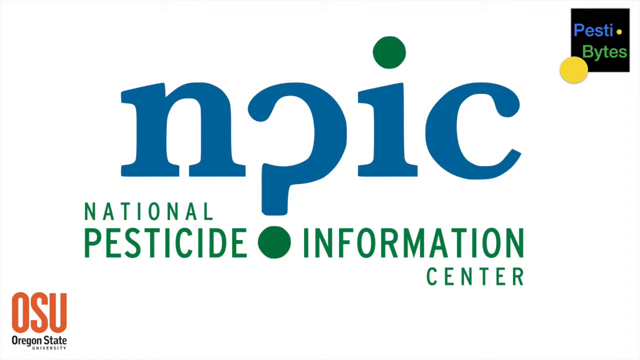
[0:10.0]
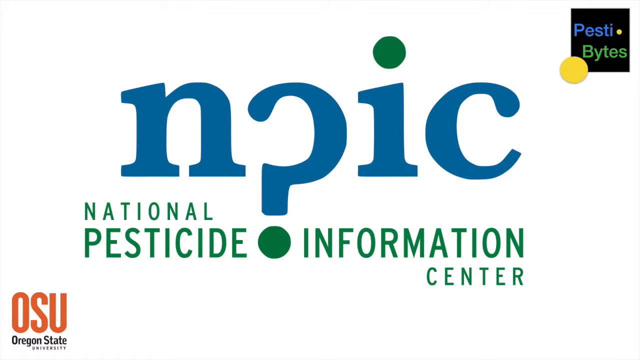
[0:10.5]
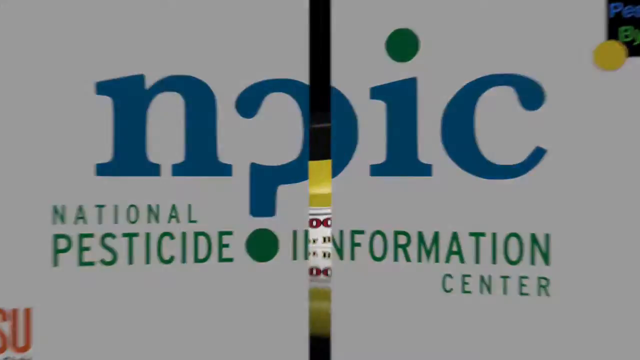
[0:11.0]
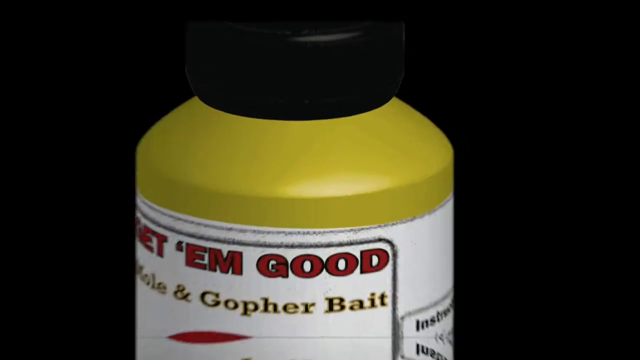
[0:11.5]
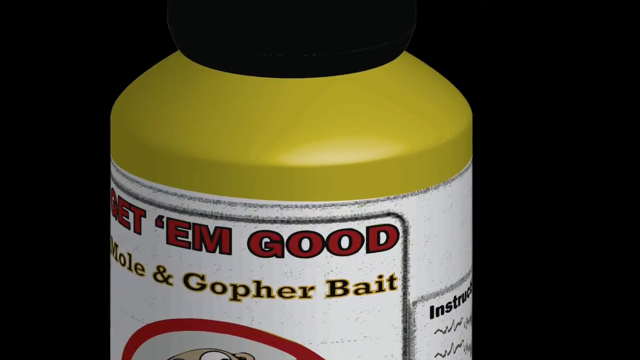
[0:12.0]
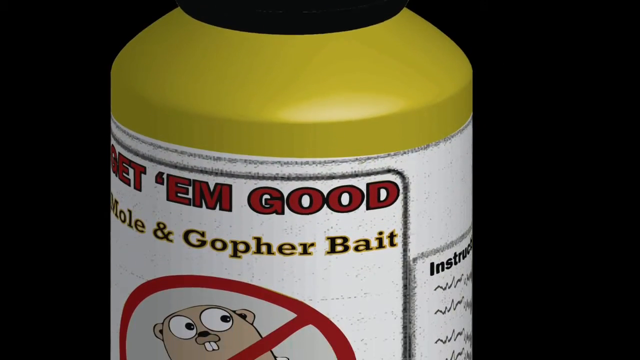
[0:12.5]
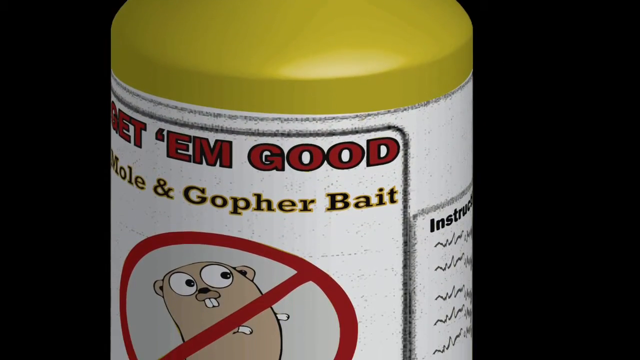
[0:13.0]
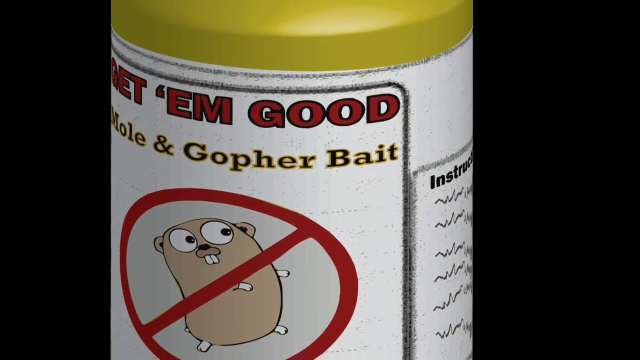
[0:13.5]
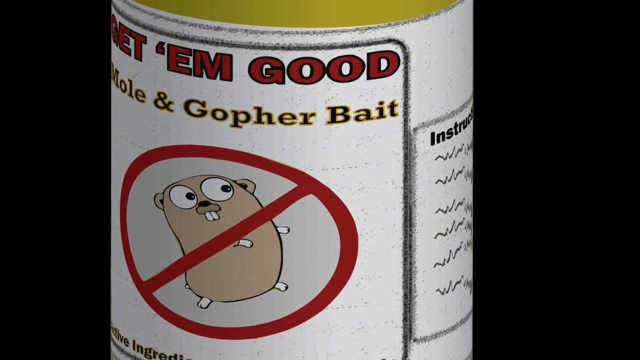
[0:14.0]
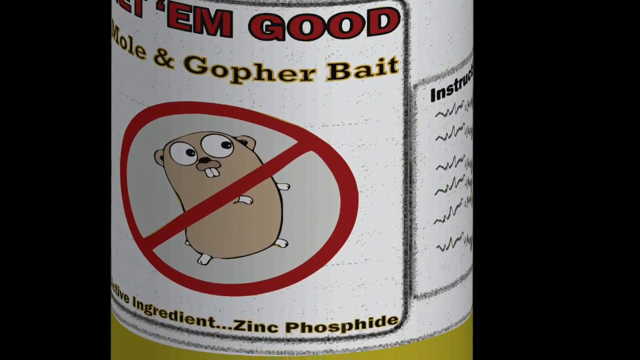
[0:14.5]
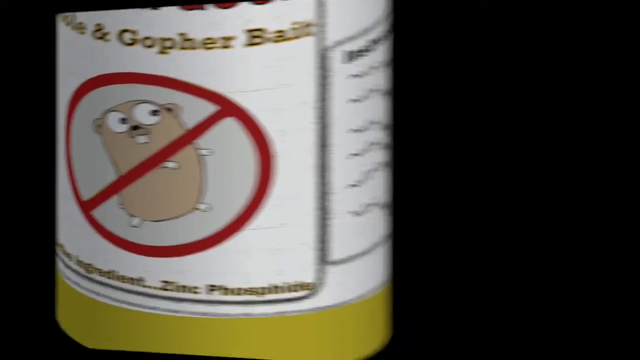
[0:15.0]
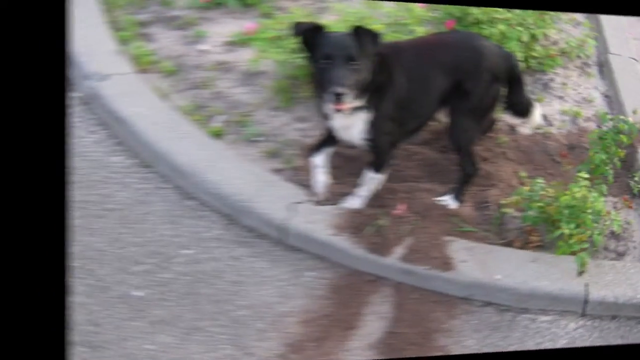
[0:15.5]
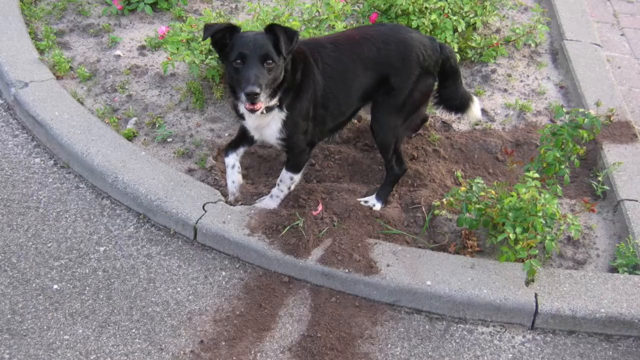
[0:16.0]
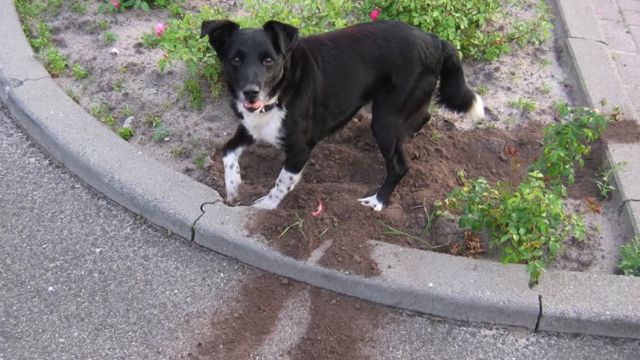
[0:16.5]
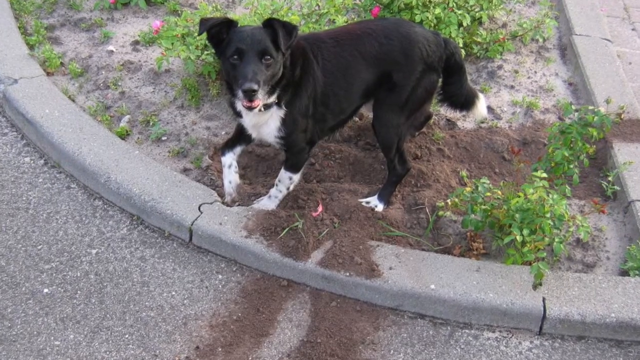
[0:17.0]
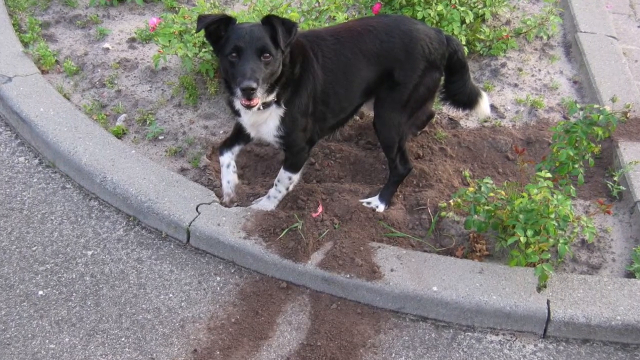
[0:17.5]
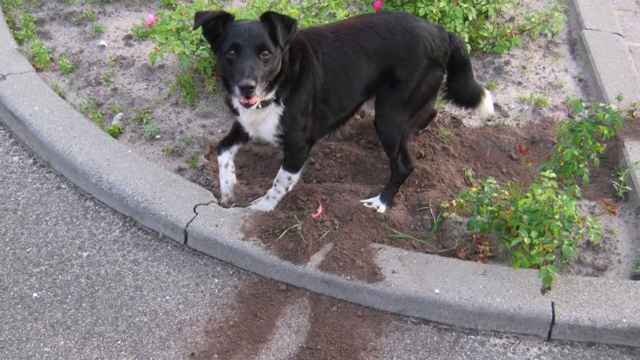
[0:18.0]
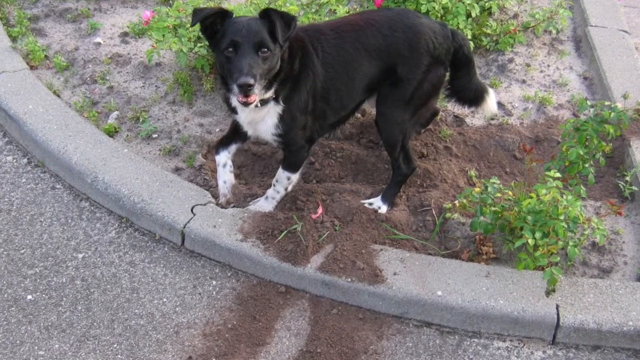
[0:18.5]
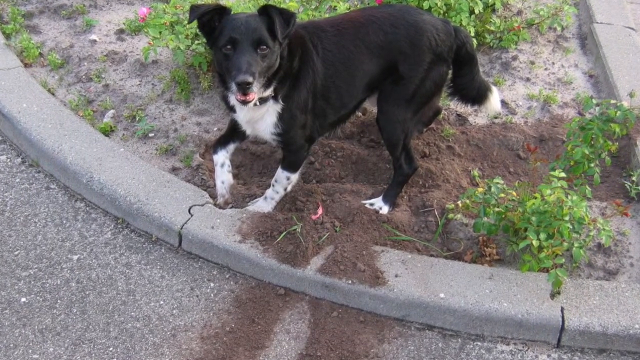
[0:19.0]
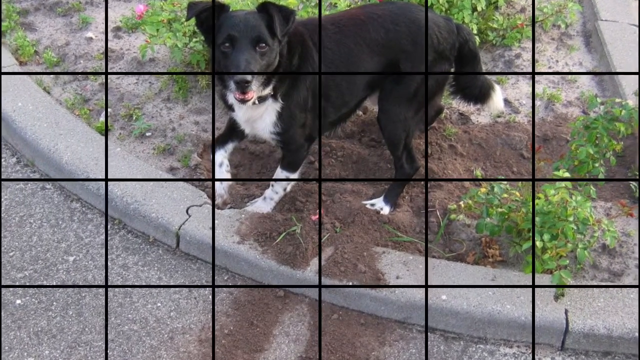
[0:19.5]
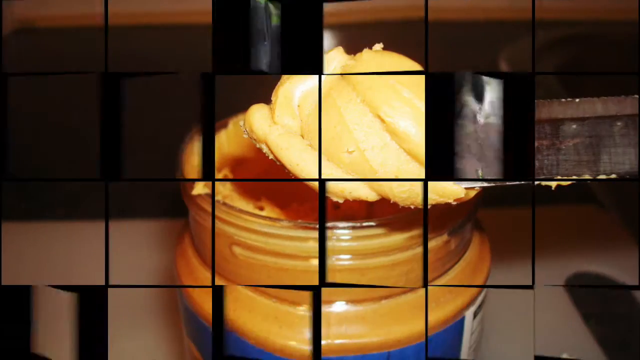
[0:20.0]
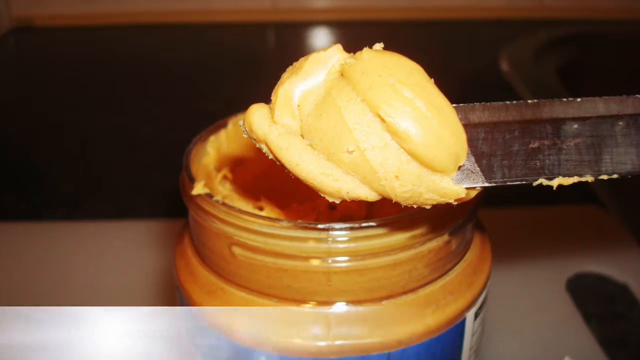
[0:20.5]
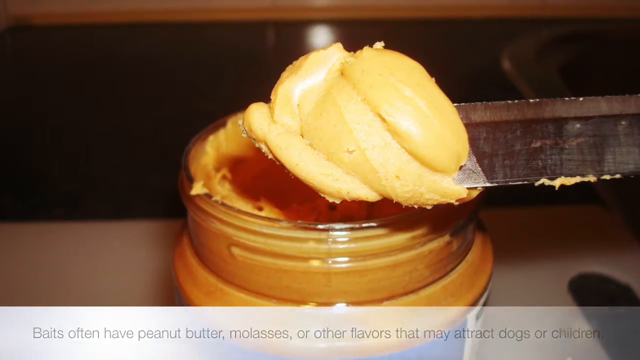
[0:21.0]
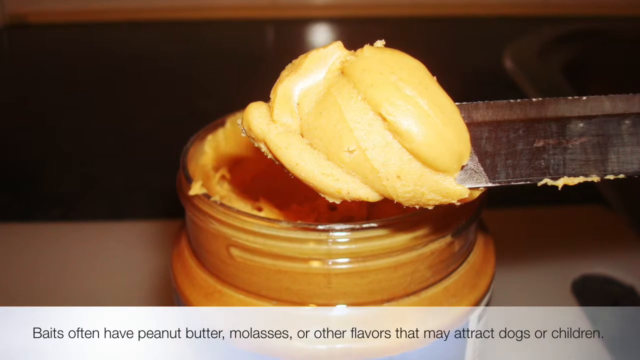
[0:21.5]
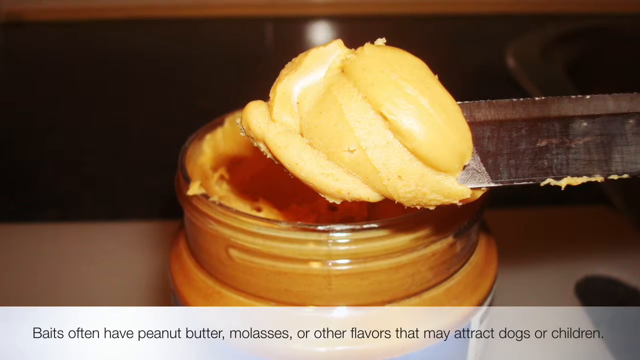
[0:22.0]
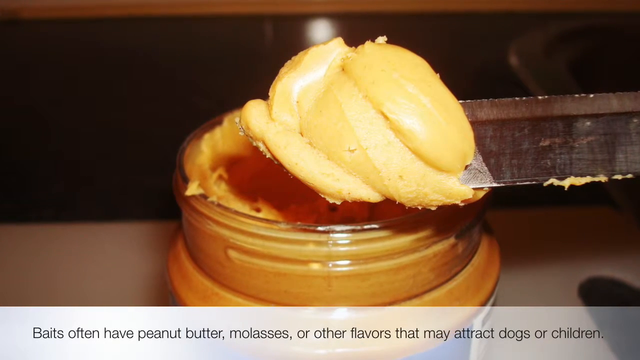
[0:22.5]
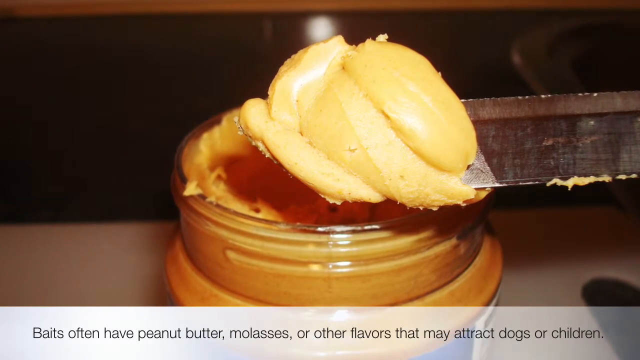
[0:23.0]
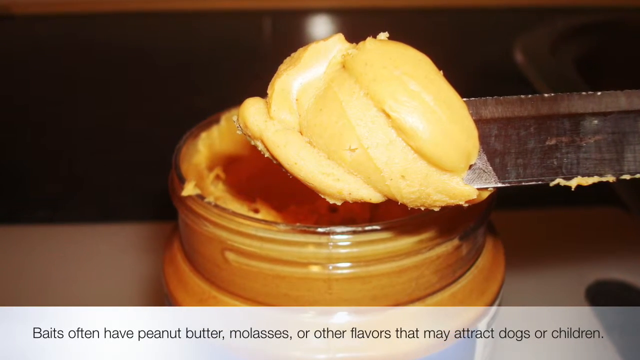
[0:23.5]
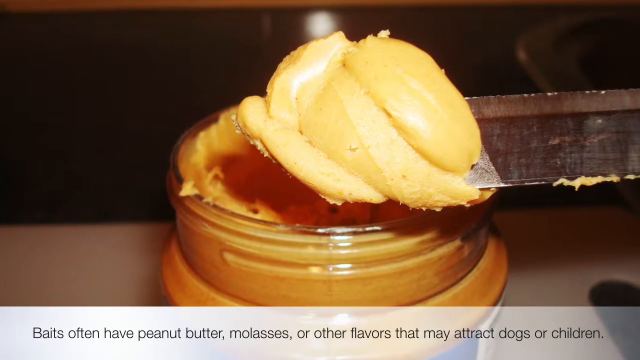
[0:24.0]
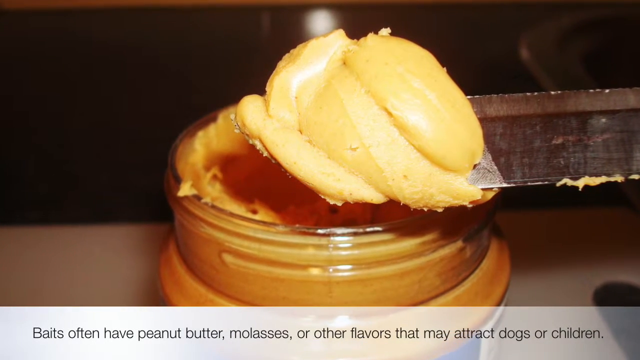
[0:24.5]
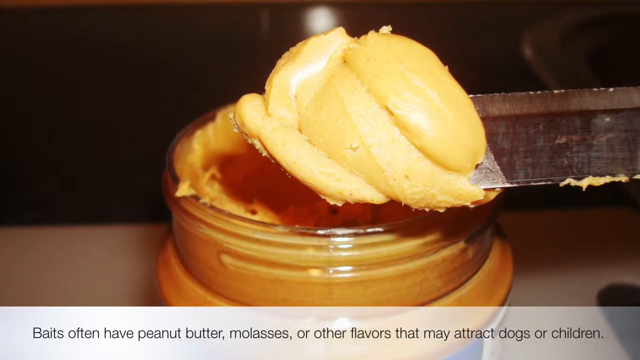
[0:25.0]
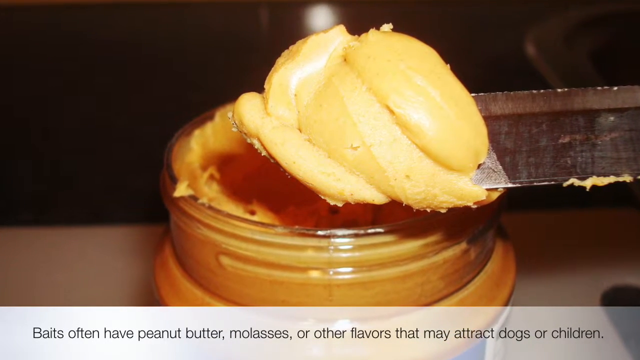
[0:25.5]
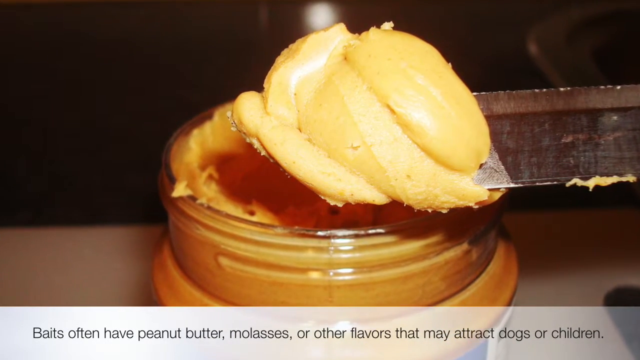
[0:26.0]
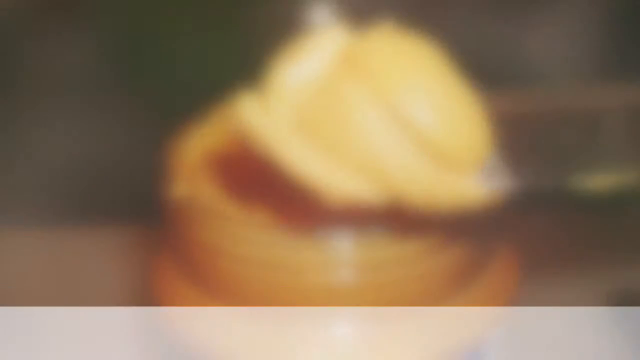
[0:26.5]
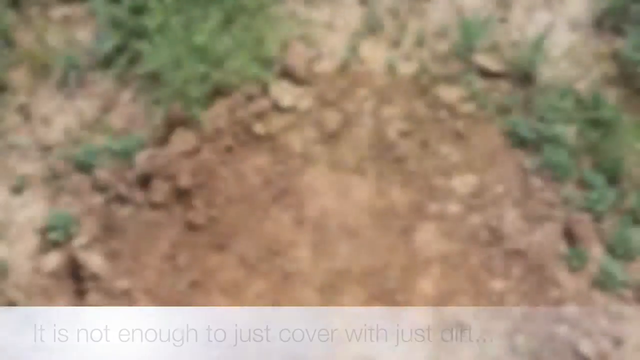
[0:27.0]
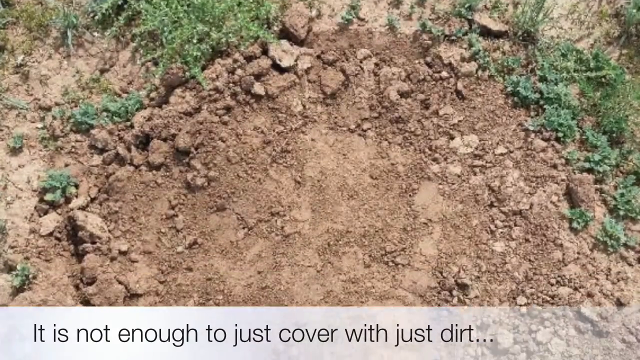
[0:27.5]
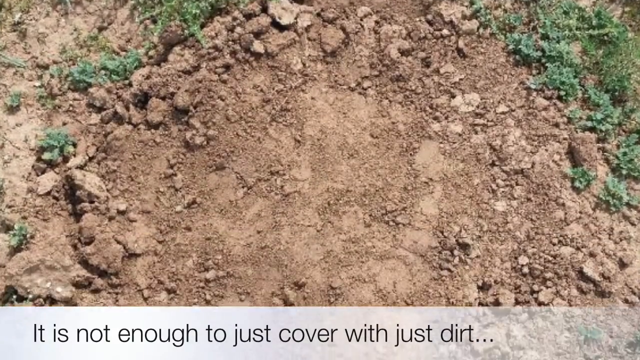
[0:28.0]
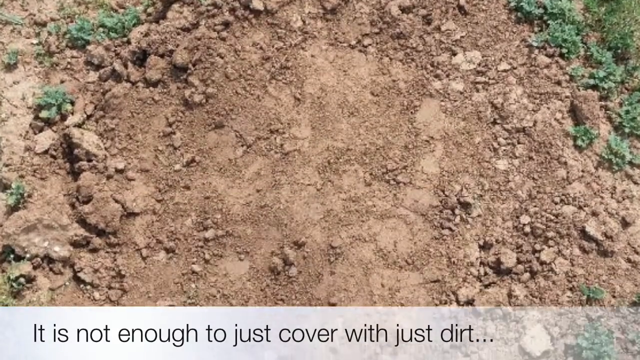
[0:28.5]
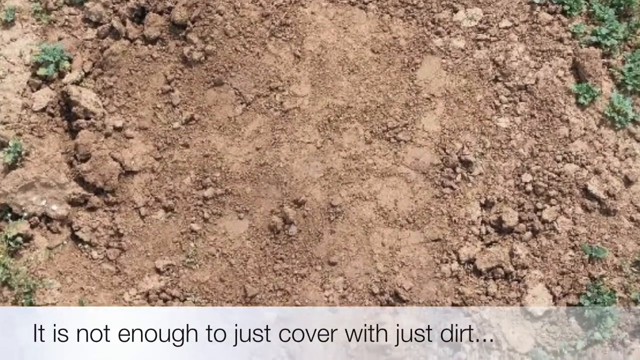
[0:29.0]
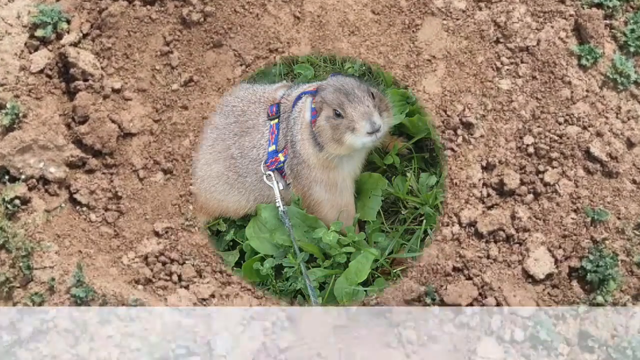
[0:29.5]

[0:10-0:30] A title card with a white background shows text, and underneath it reads "National Pesticide Information Center." In the bottom left corner is a logo reading "OSU, Oregon State University," and in the very top right corner is a logo that is a black square with text inside reading "PESTIBITES." The screen transitions to a black background with a 3D-generated yellow bottle bearing a white label that reads "Get Em Good Mole and Gopher Bait." The label shows a cartoon-style gopher, essentially a being with ears, eyes and small legs, inside a large red circle with a red cross mark through its center. The camera slowly pans down the bottle, then transitions toward the right to a photo of a black and white dog that has extensively dug up a small garden. The camera slowly zooms in on the dog. Next, someone pulls brown peanut butter out of a plastic jar with a stainless steel butter knife, and a large glob of peanut butter is held above the jar's opening.